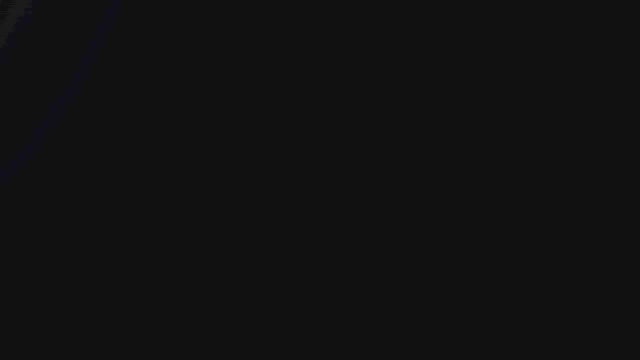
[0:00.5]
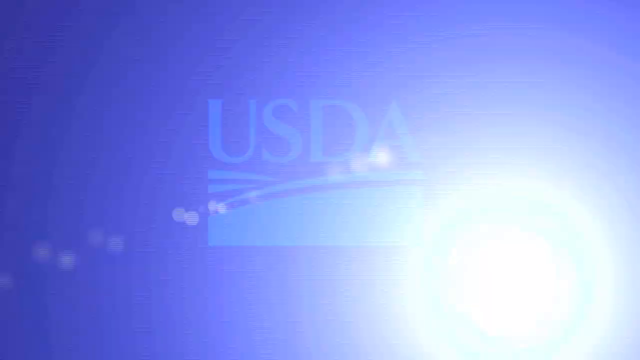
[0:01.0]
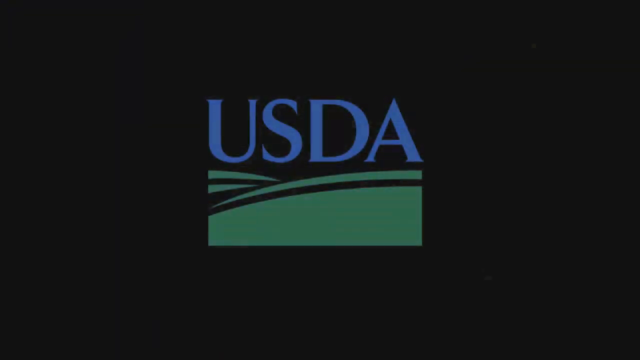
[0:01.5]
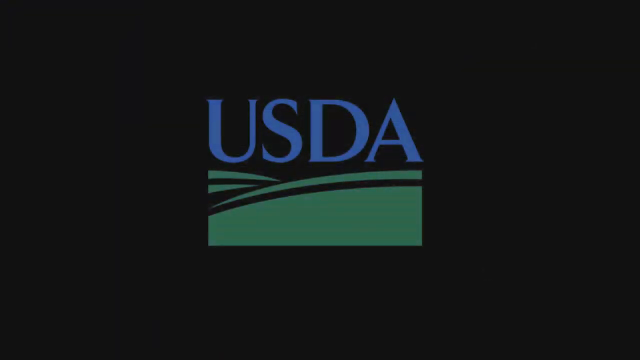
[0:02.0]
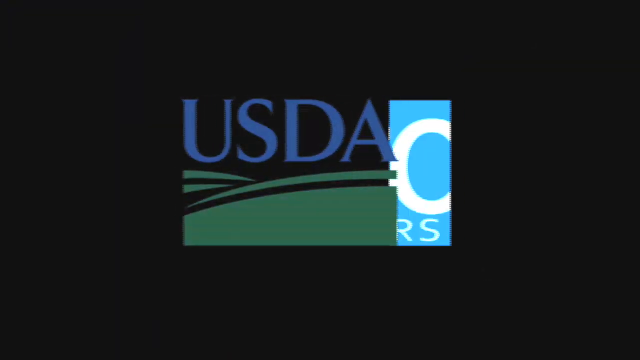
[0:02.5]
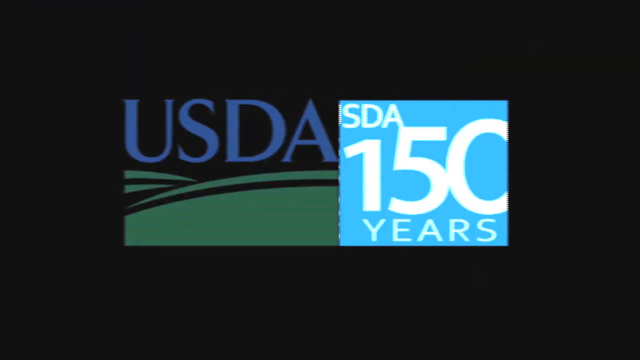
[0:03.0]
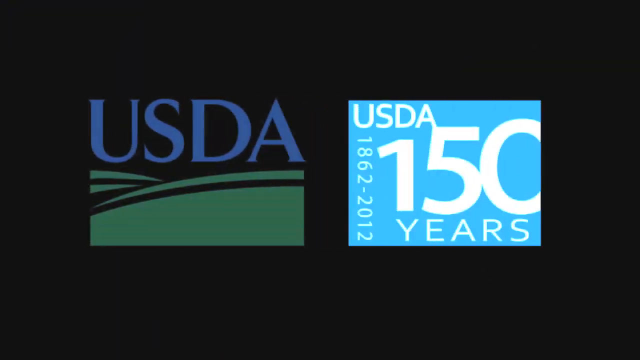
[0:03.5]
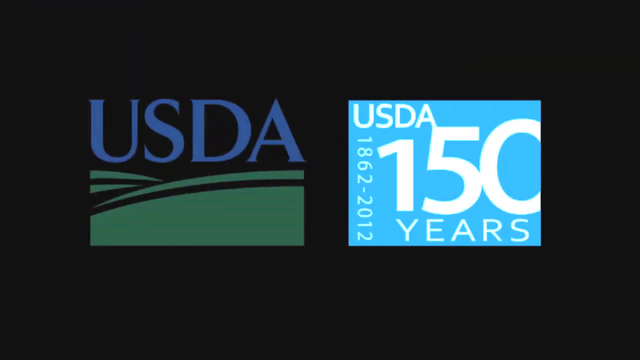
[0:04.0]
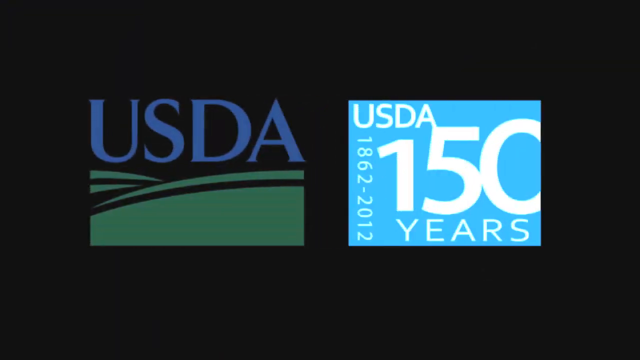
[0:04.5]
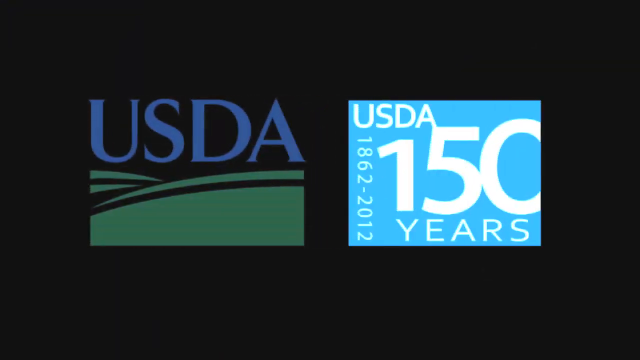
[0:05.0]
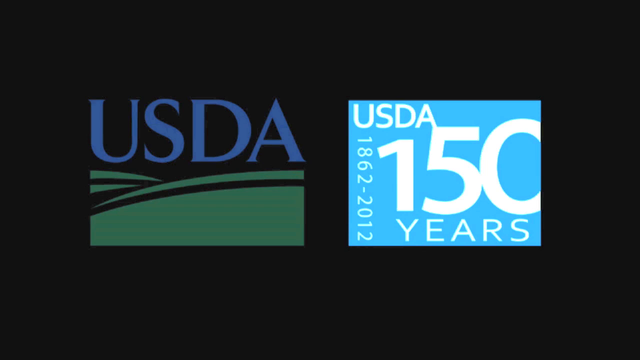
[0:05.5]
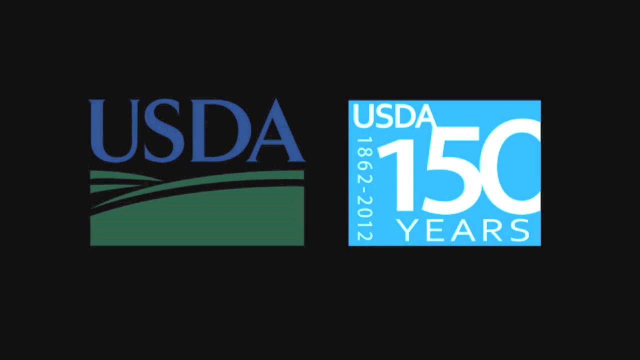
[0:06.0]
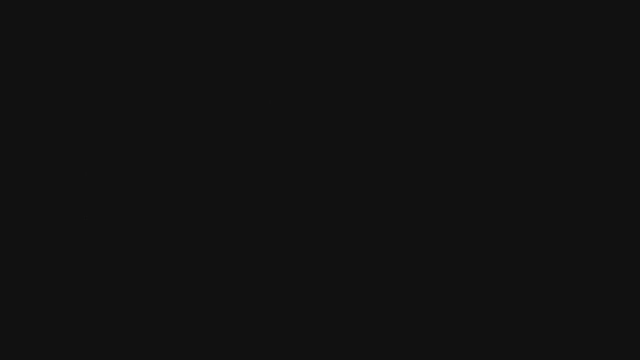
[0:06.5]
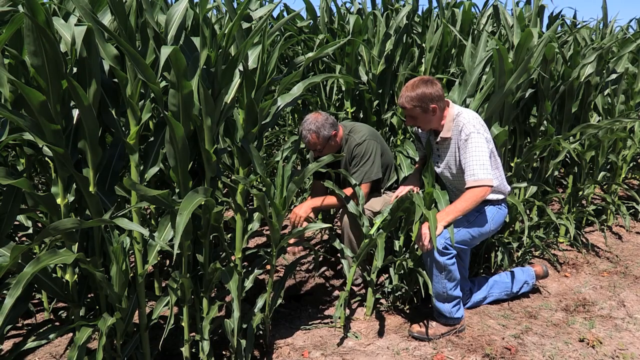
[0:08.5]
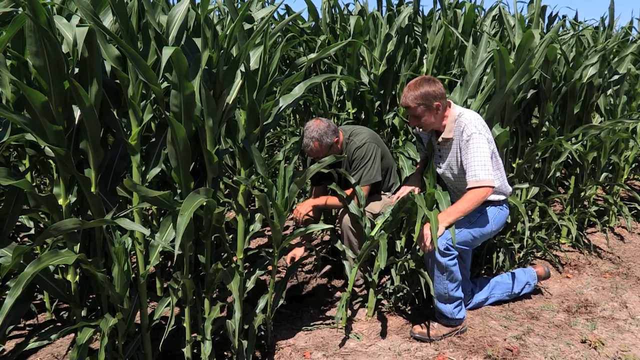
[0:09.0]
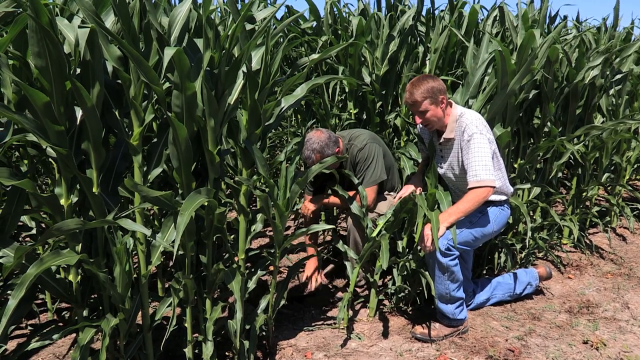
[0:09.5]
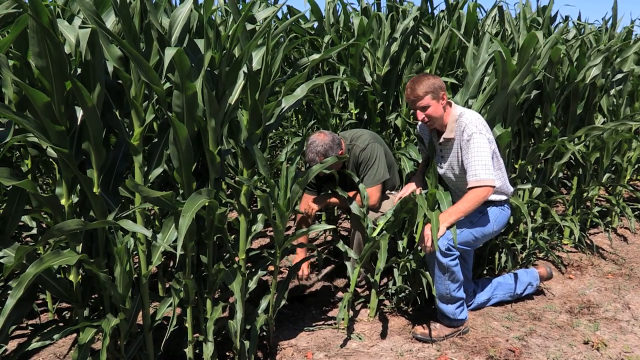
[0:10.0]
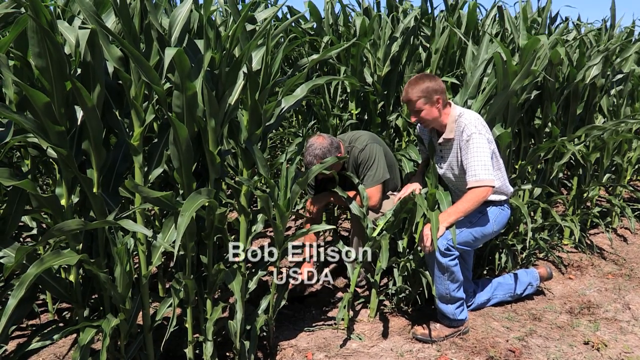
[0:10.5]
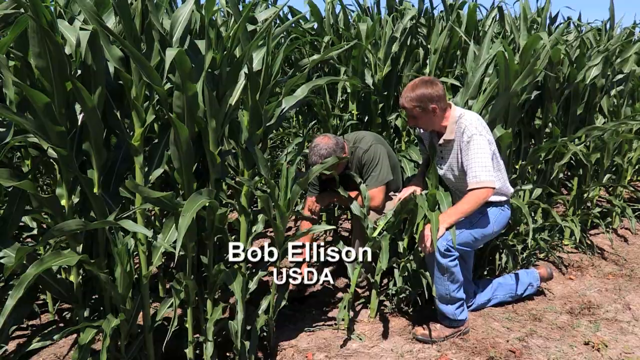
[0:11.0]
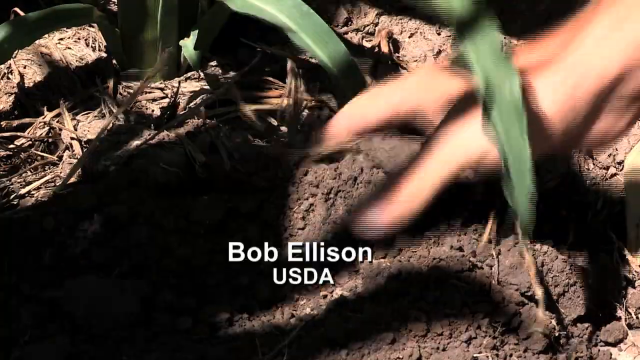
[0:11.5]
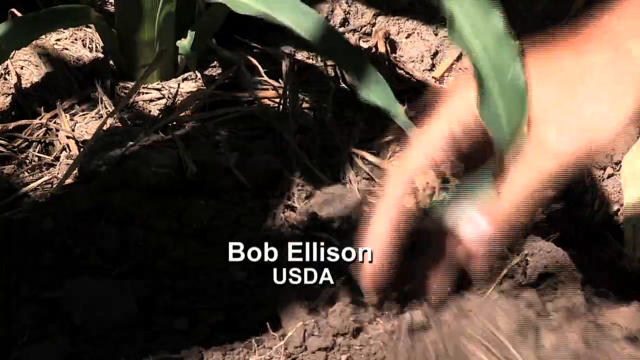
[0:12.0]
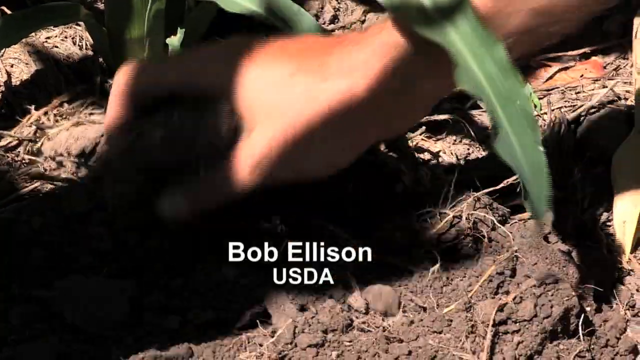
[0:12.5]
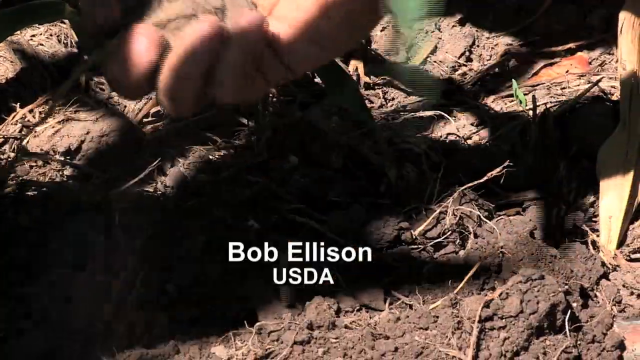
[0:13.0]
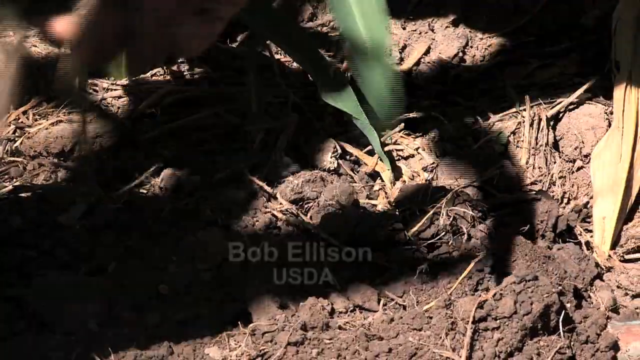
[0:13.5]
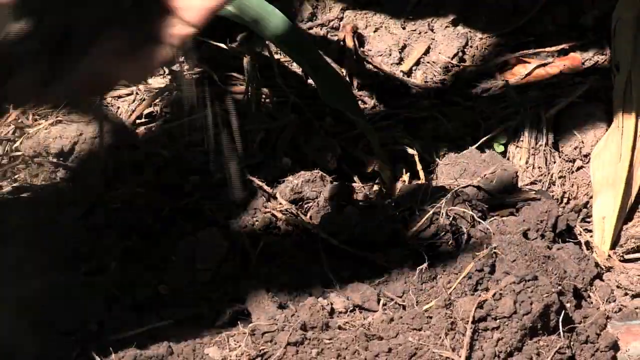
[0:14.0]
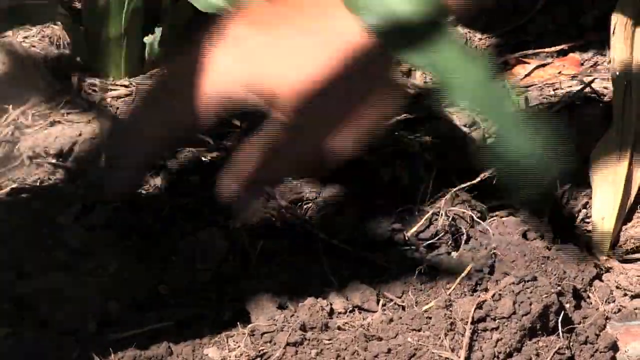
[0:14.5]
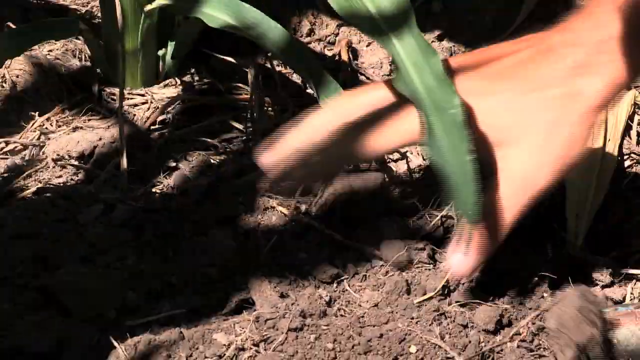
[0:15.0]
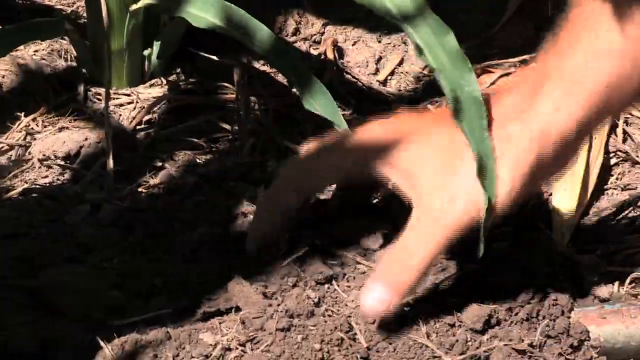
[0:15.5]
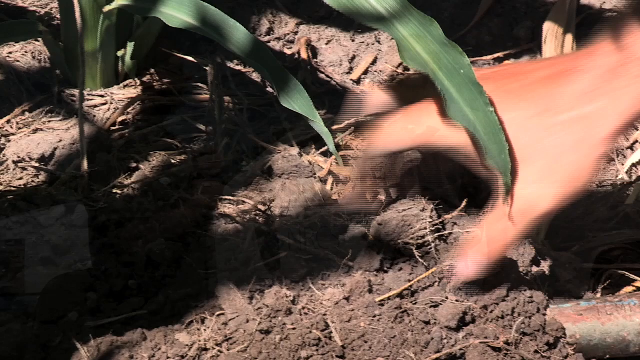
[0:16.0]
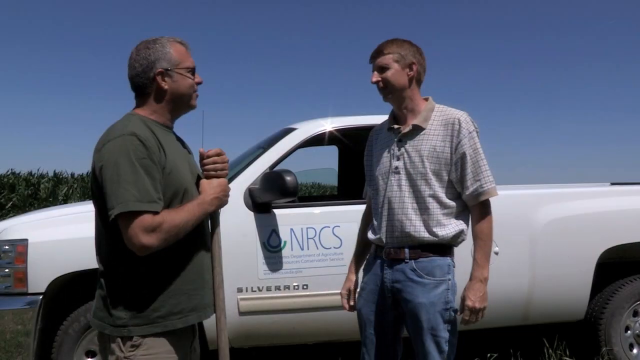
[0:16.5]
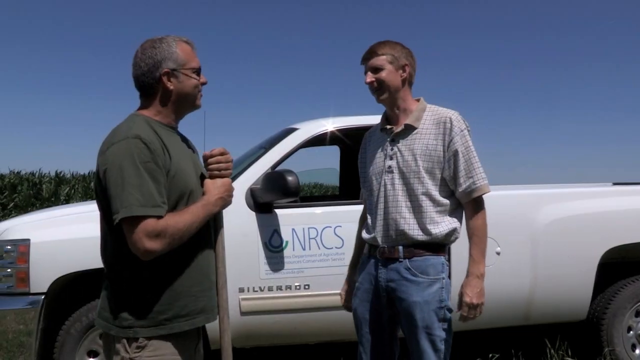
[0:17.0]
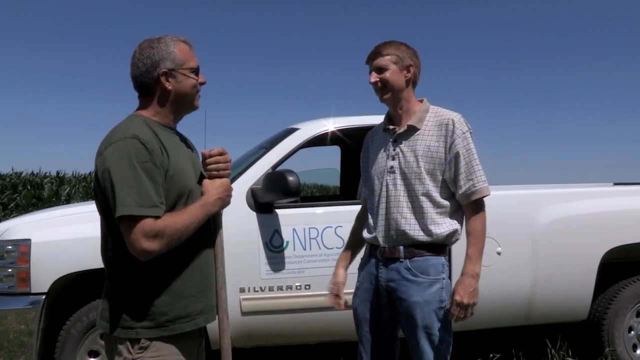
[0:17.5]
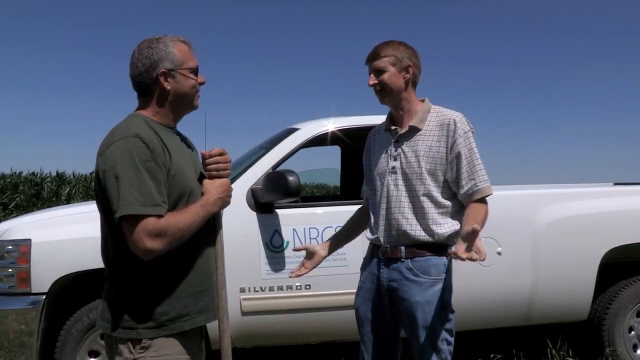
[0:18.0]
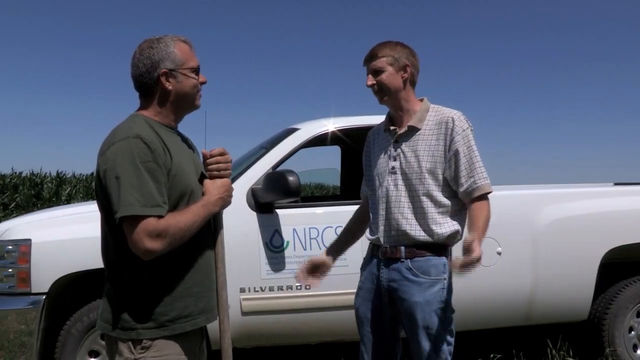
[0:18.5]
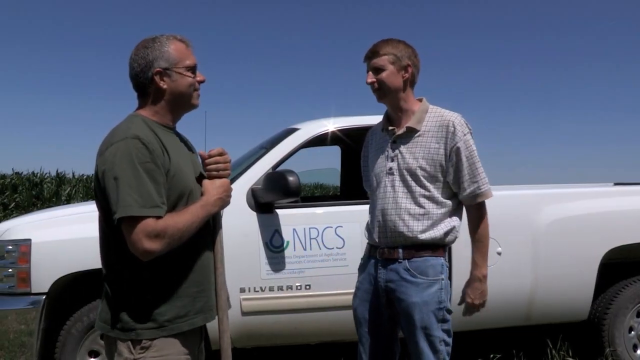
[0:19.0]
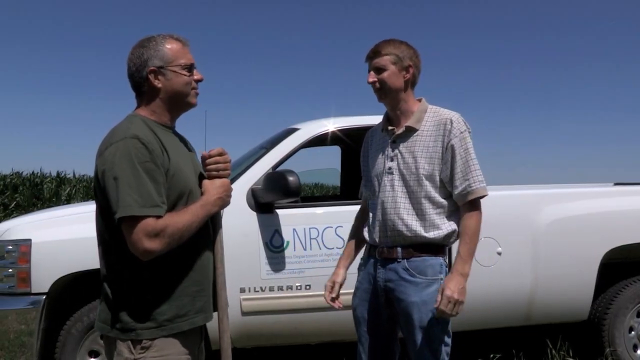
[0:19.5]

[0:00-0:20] The video opens with a USDA advertisement showing that the USDA is 150 years old, from 1862 to 2012. It then cuts to two people kneeling in the middle of a very large cornfield with very tall plants, talking to each other, and the name Bob Ellison from the USDA appears. One of them wears a green shirt; the other wears a white shirt, pants and shoes. The camera zooms in as he moves his hand through the plantation and passes his hands over the ground in the cornfield. The video then cuts to the two standing in front of a silver-plated white truck, talking slowly, with the person in the white shirt and pants moving his hands as he talks. The word NRCS is visible on the truck door.